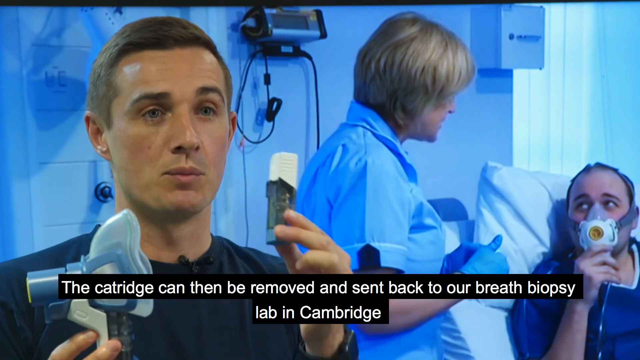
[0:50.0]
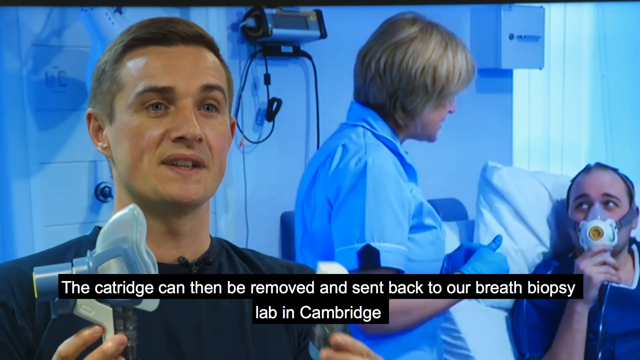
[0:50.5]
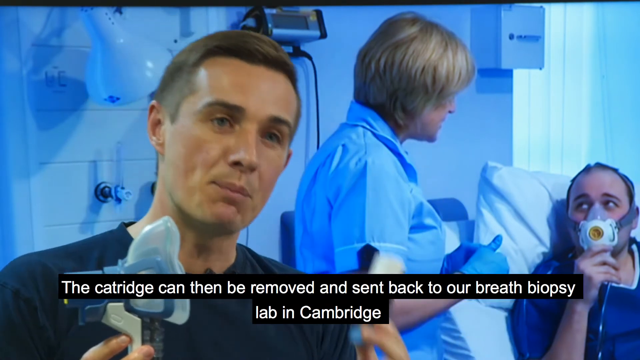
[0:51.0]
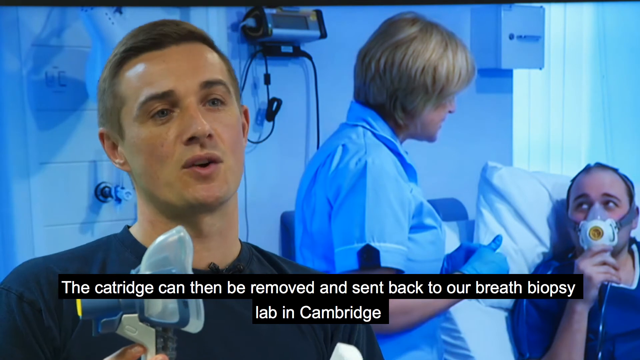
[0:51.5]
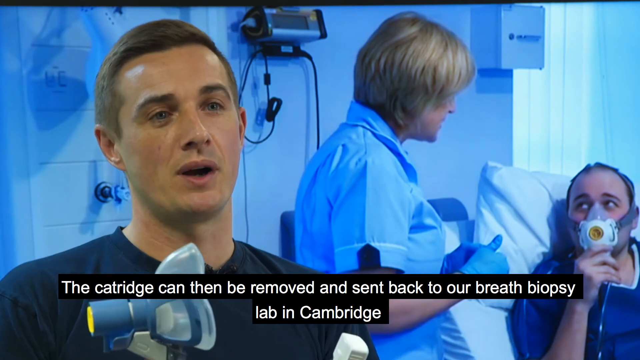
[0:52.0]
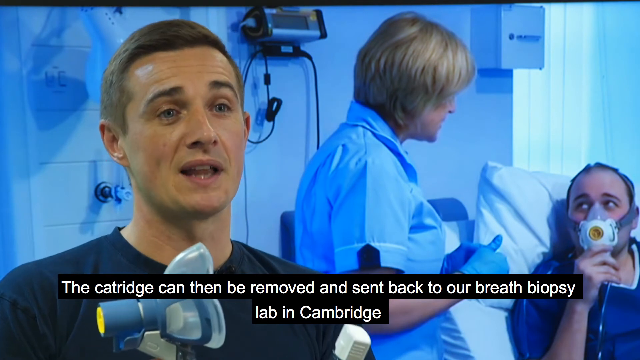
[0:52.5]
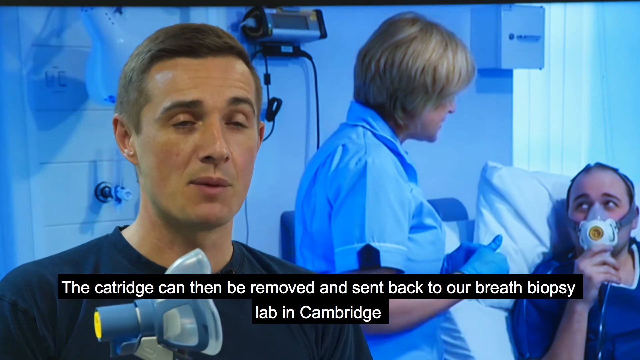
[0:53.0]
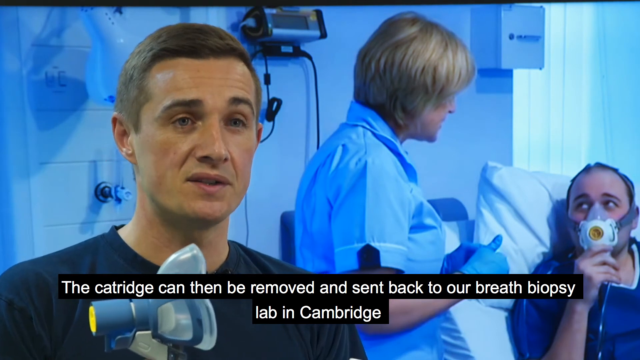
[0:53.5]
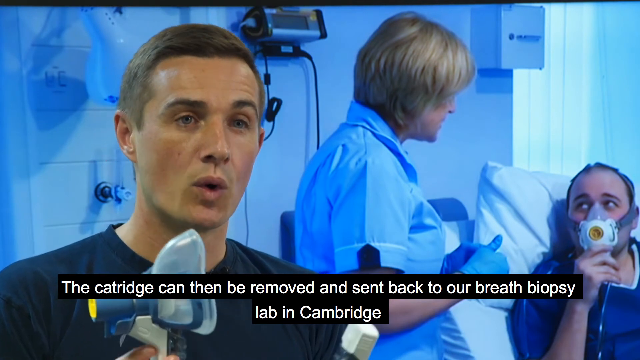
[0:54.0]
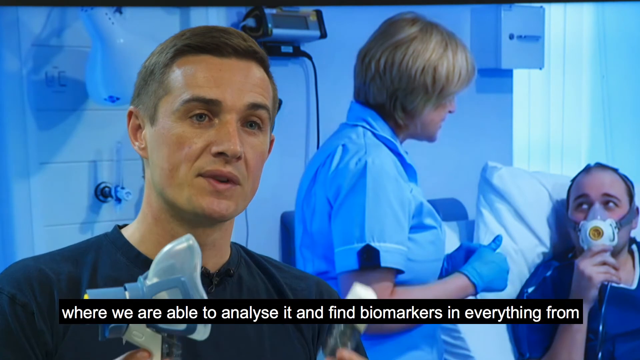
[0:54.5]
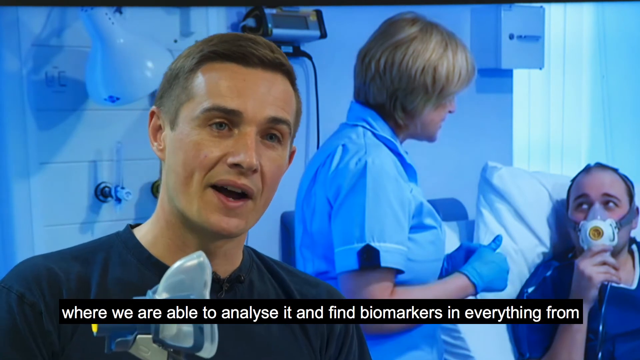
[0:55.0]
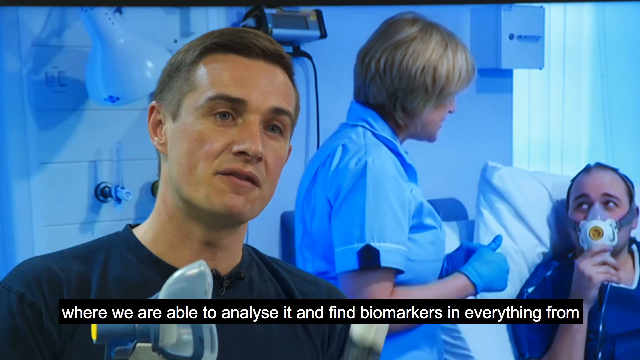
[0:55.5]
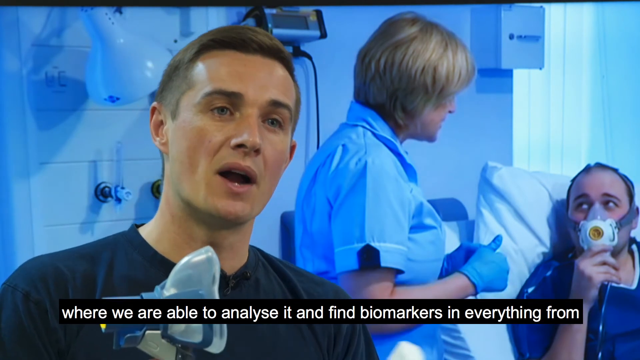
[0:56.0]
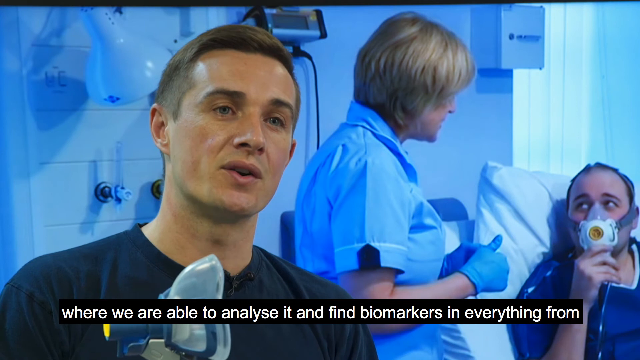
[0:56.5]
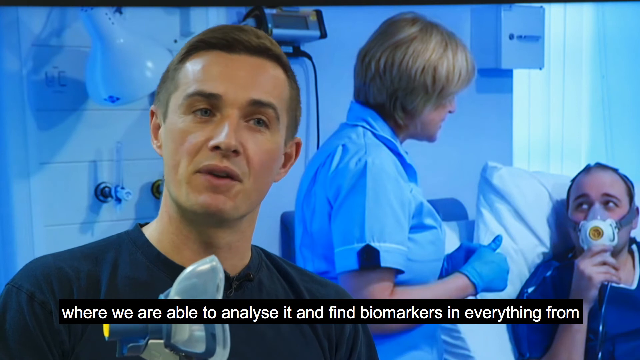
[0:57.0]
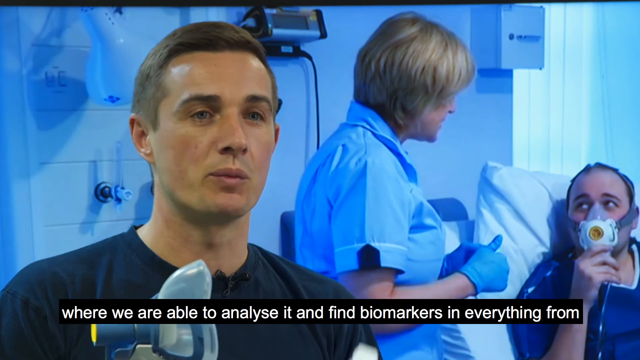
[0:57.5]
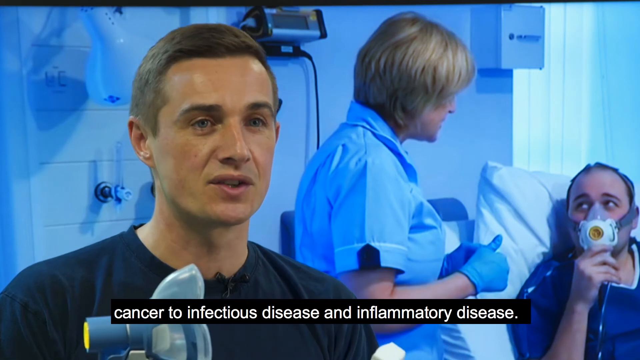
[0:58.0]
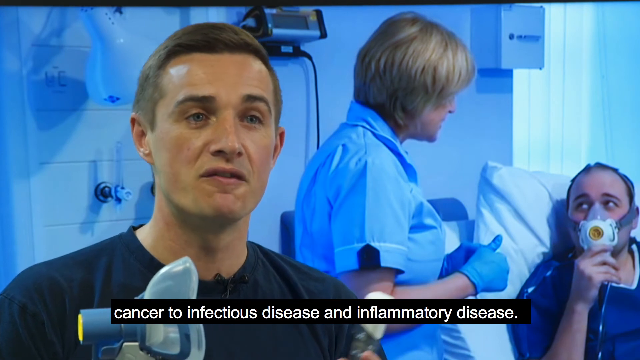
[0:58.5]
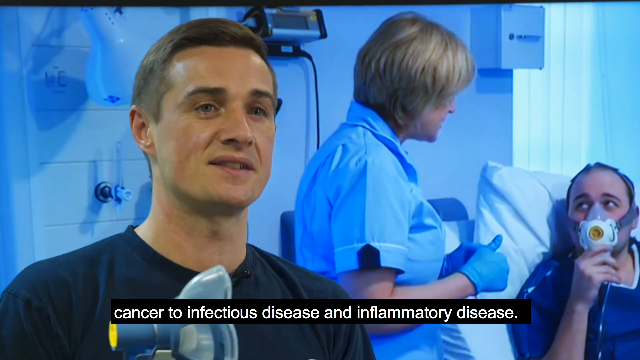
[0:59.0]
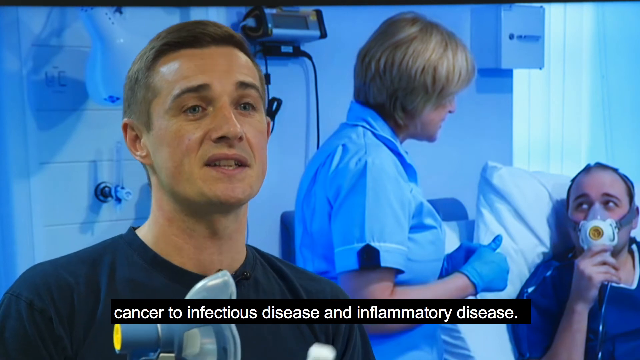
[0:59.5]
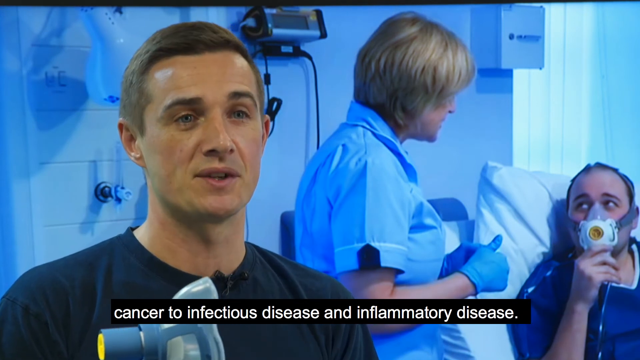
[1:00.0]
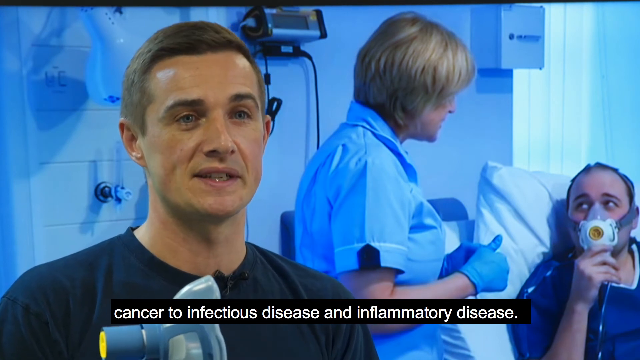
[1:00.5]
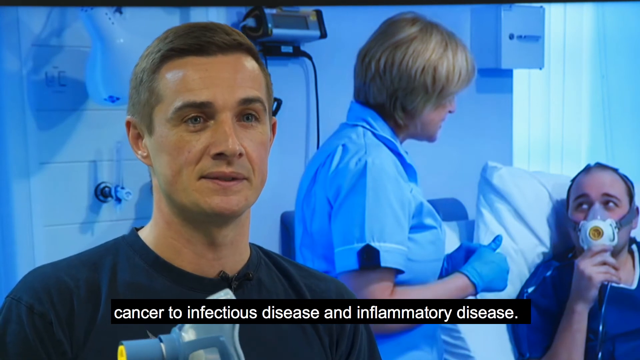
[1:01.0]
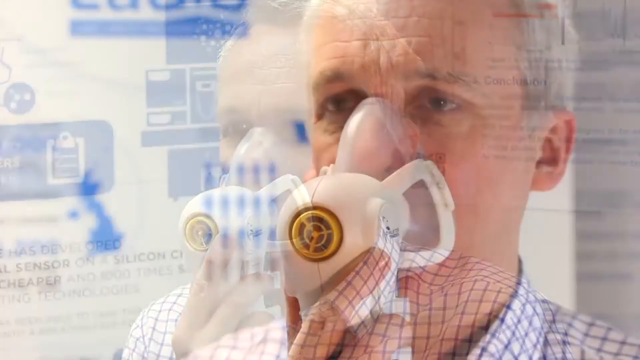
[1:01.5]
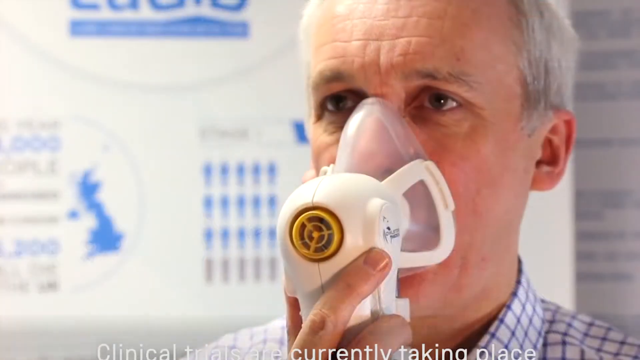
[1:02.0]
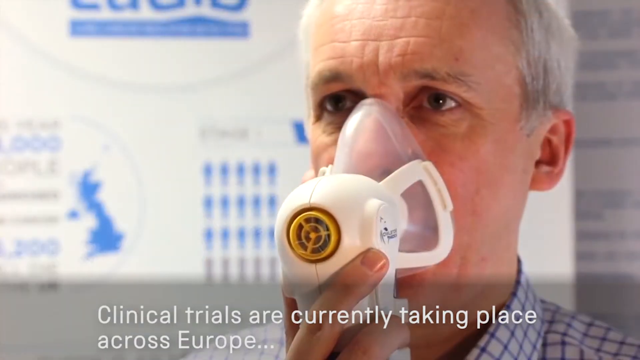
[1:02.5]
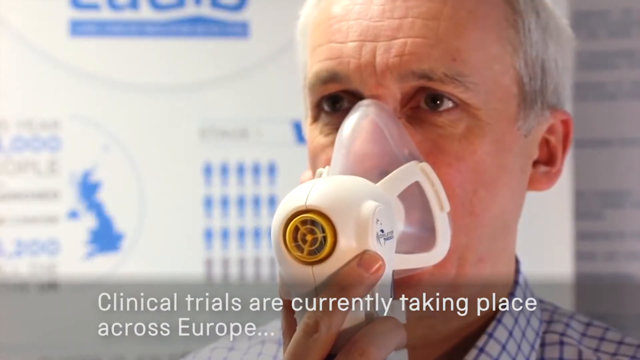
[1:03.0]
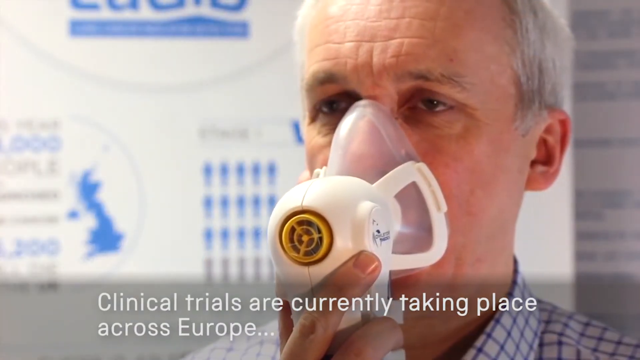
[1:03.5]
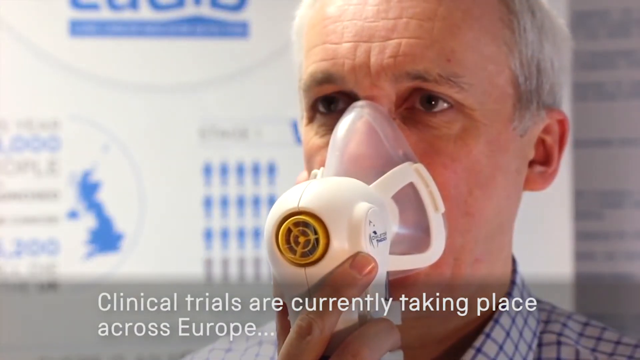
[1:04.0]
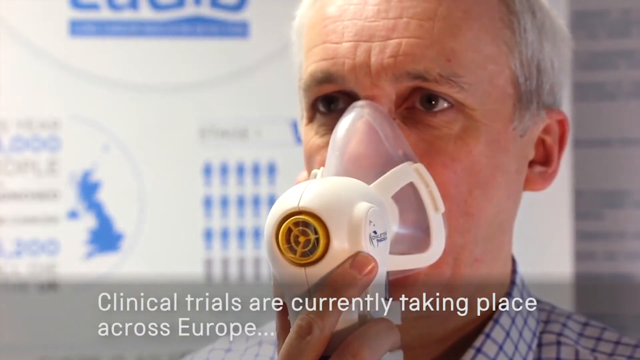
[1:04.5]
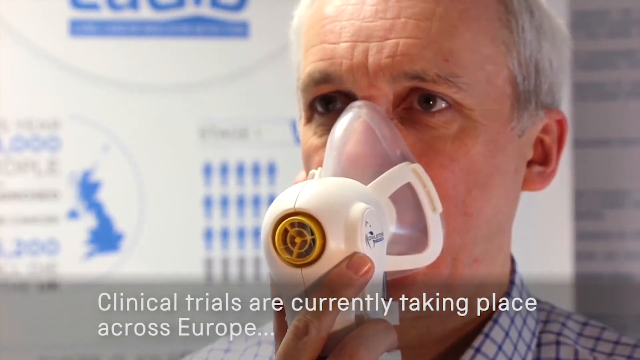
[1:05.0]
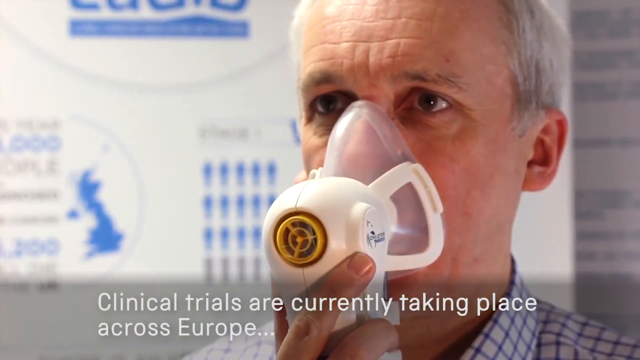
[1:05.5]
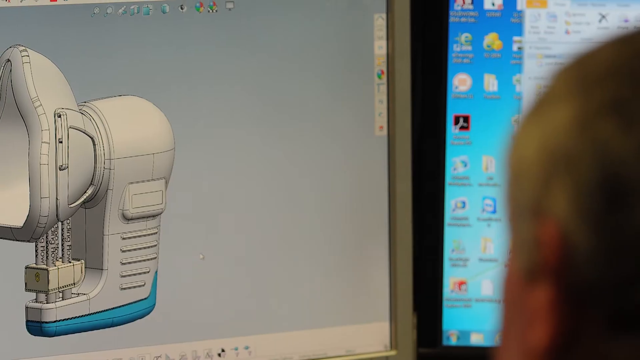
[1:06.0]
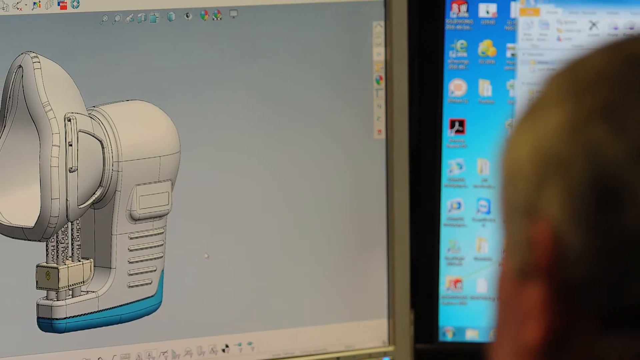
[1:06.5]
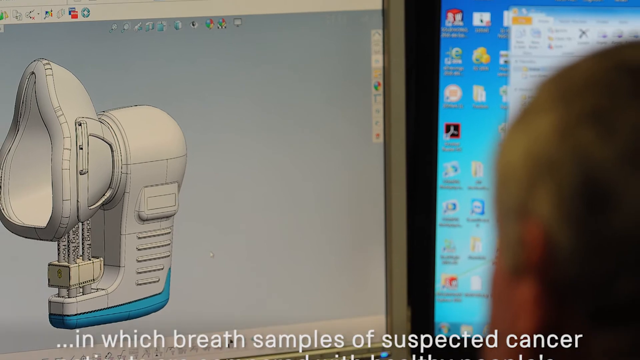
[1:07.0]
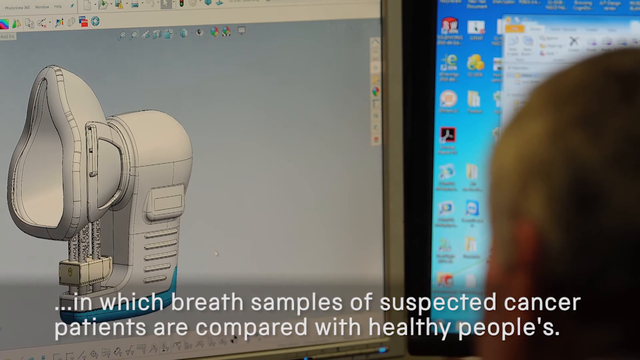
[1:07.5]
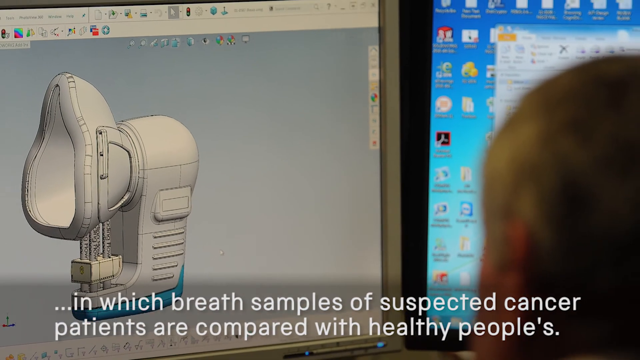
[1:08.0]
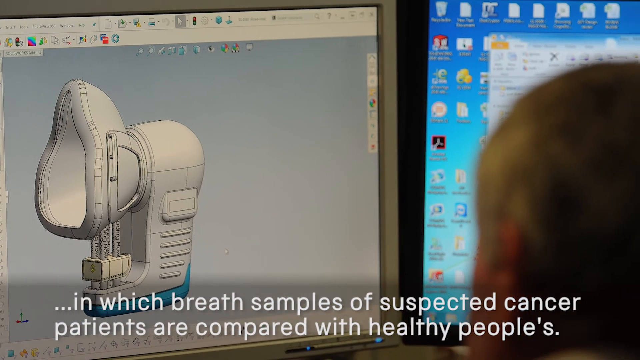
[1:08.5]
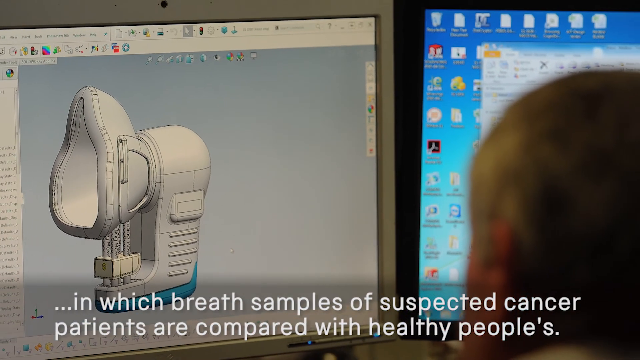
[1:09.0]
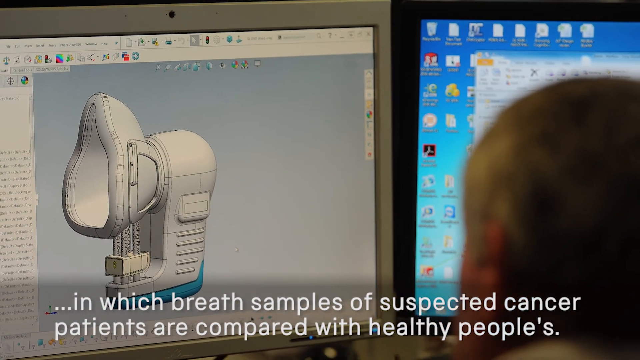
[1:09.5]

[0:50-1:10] The CEO, Billy, continues explaining the device, which collects chemicals from the breath, apparently using some sort of filtering device inside. He says biomarkers of cancer, a variety of infectious diseases and inflammatory diseases can be found in the breath. On-screen titles mention that clinical trials are currently taking place in which breath samples of suspected cancer patients are compared with those of healthy people.